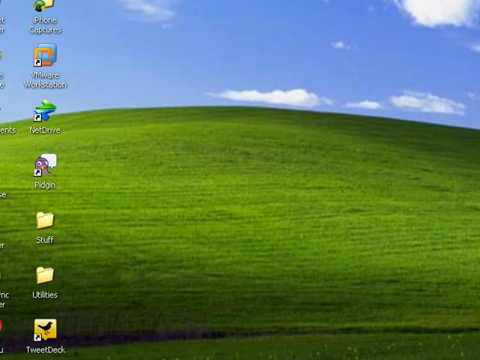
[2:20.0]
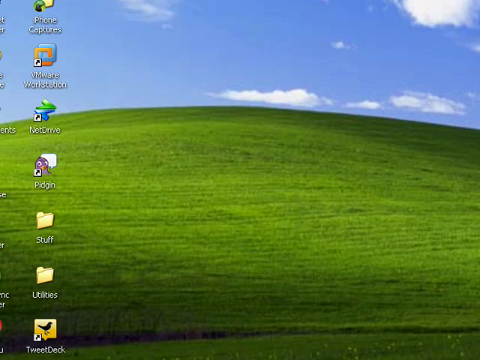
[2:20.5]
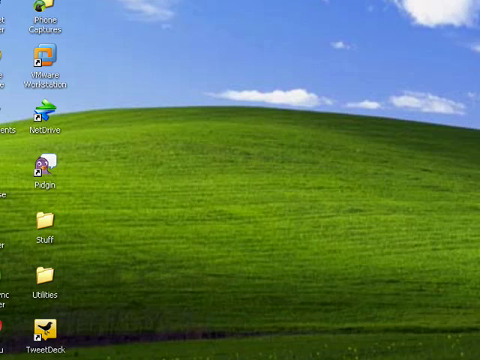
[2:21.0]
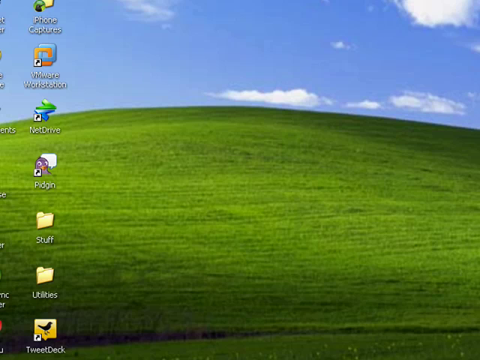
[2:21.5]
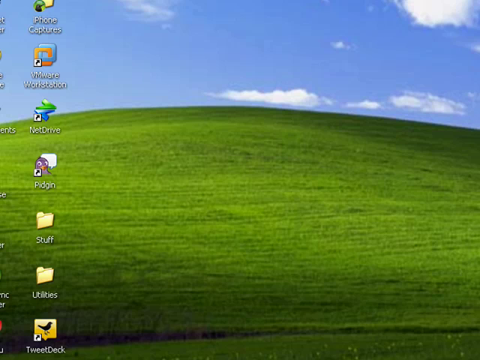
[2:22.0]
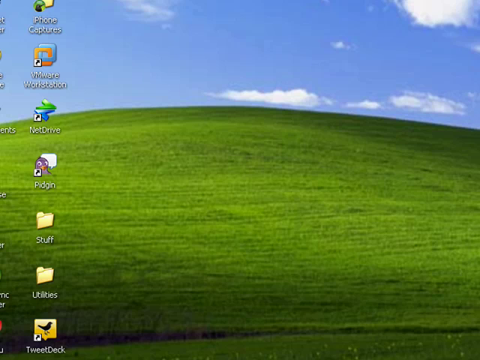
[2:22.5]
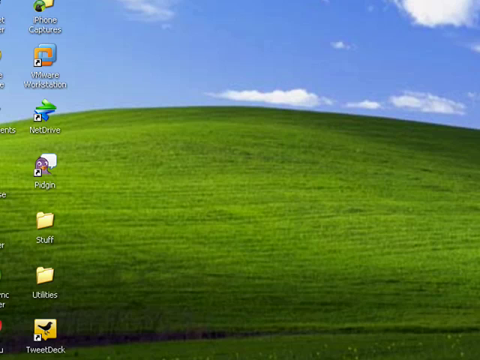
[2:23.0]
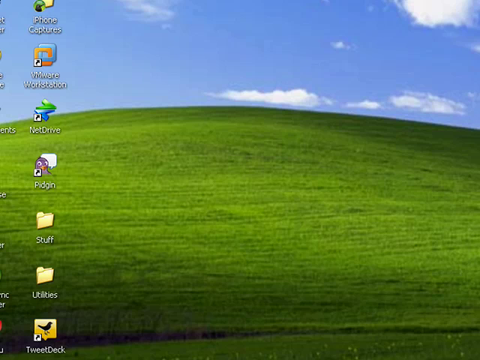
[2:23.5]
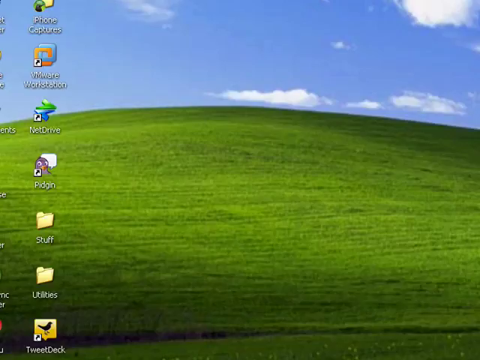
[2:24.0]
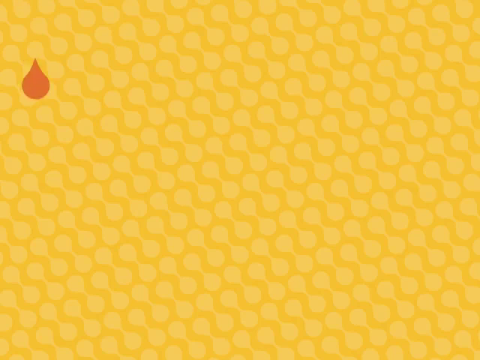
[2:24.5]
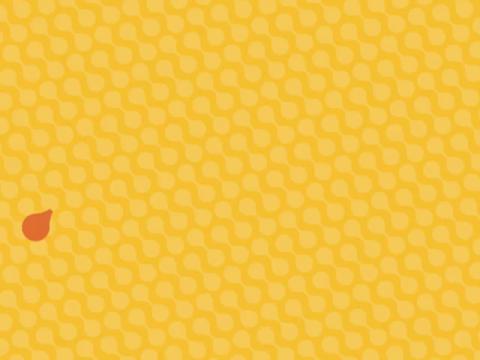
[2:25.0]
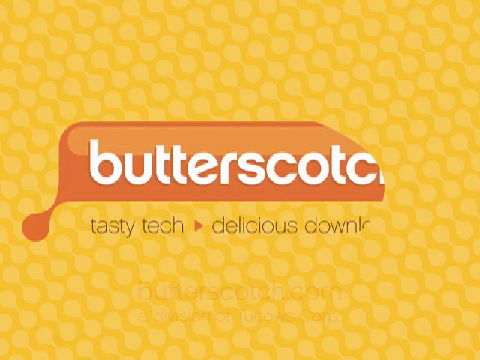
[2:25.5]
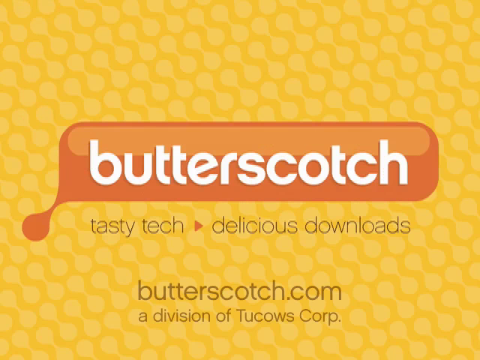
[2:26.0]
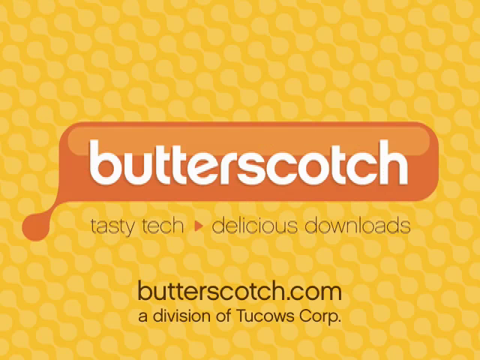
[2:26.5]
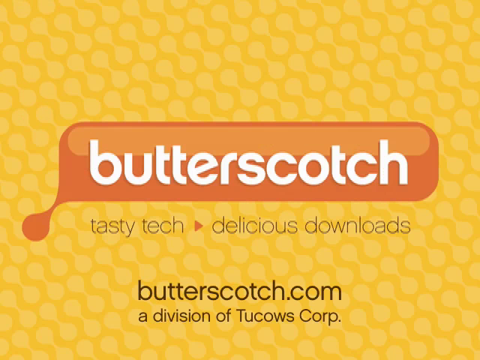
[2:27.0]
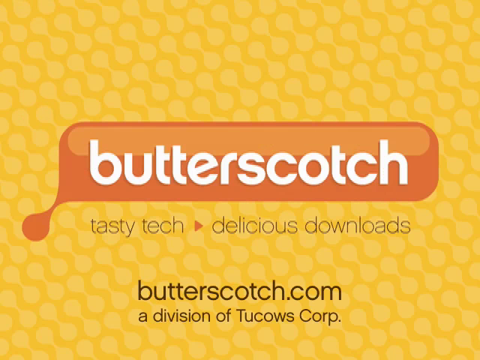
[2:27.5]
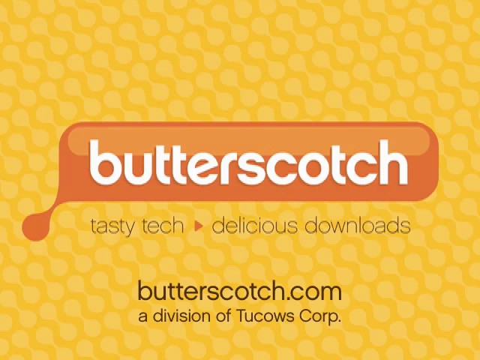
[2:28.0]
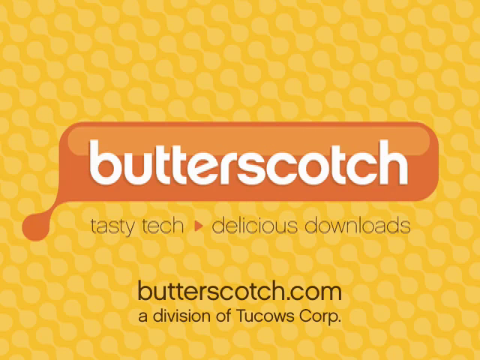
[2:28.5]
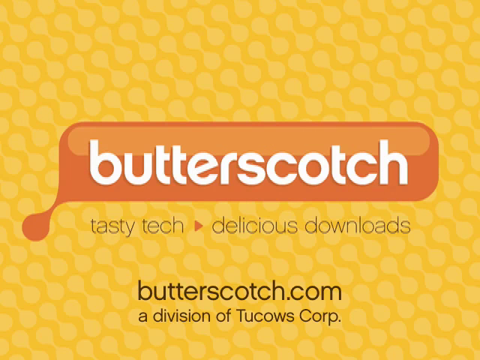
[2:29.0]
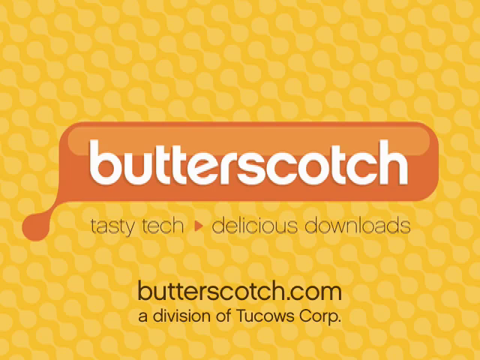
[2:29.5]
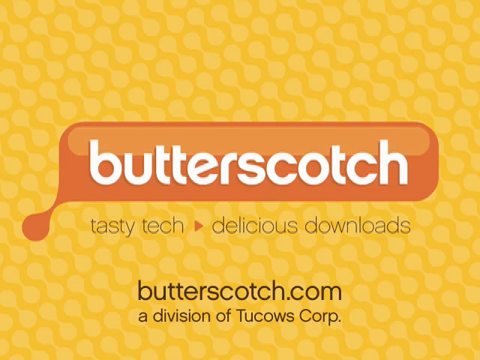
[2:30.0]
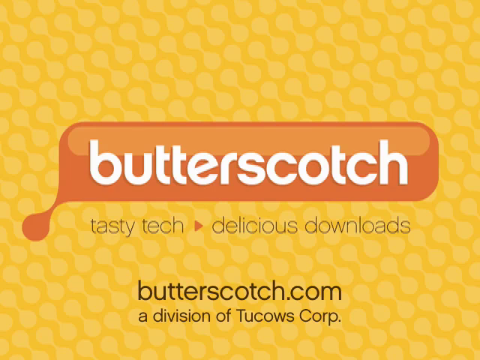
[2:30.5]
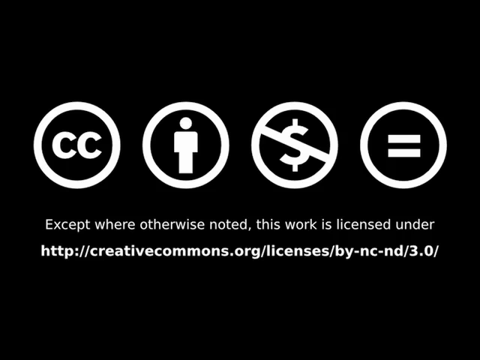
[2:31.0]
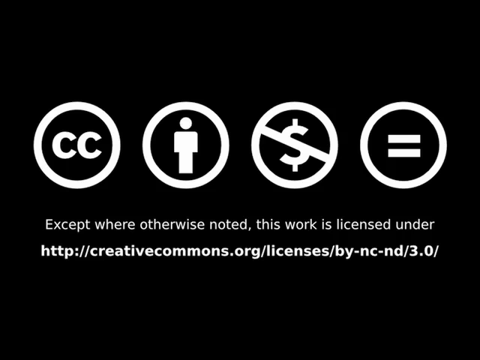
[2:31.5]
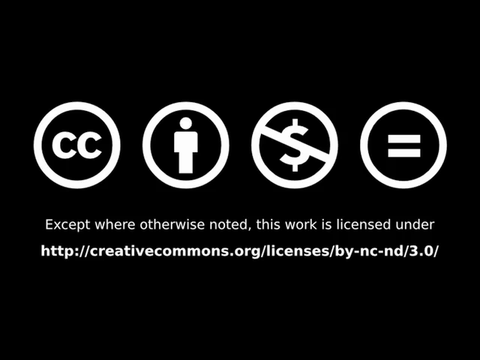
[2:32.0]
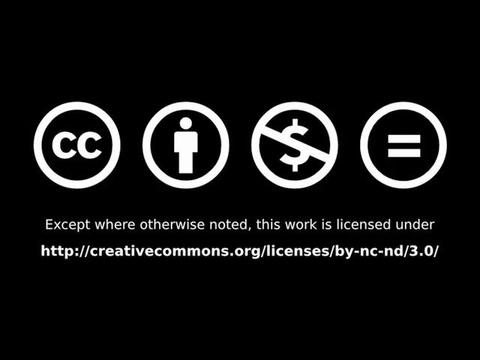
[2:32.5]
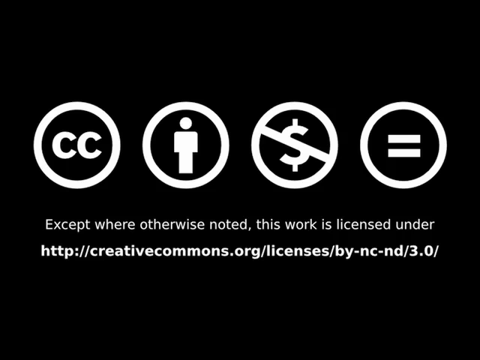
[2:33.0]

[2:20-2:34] A screensaver shows a green hill. Then a yellow honeycomb background appears; a little butterscotch-colored drop comes out, hits the ground, and a bubble pops up reading "butterscotch, tasty tech, delicious downloads, butterscotch.com, a division of Two Cows Corp." That disappears off the screen, and icons appear, one of them with a line through it, followed by the screensaver again. The butterscotch bubble coming out of the drop hitting the yellow honeycomb background repeats. The screensaver is darker on the bottom than on the top, possibly just a shaded area creating the darker green, which looks a little black. Only one vertical row of icons is visible on the left side.